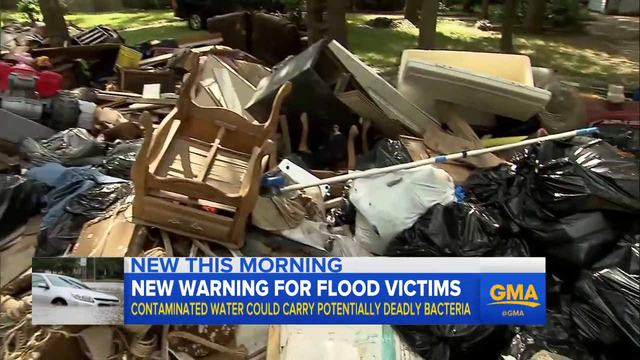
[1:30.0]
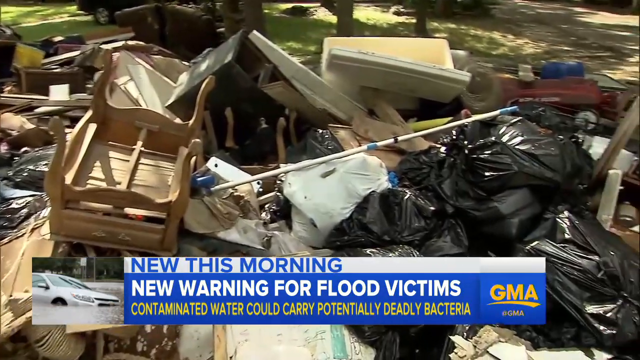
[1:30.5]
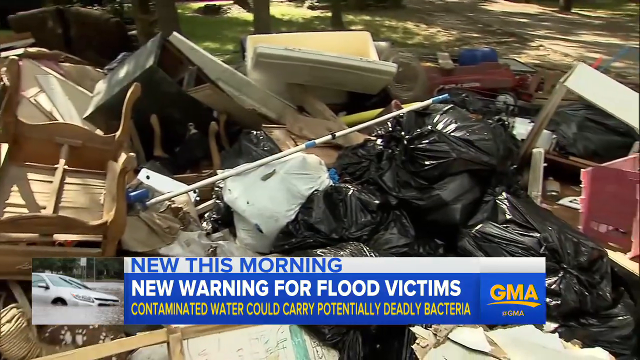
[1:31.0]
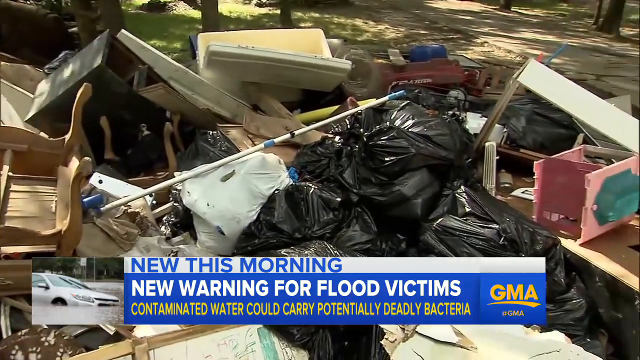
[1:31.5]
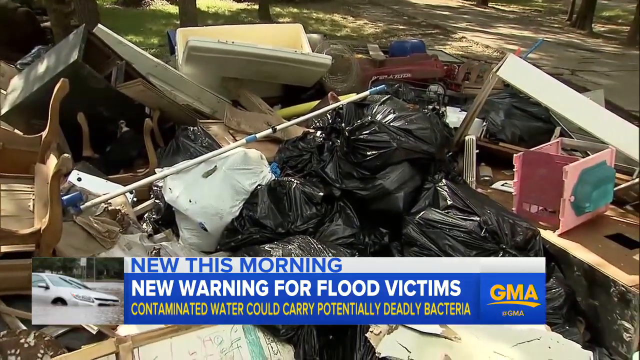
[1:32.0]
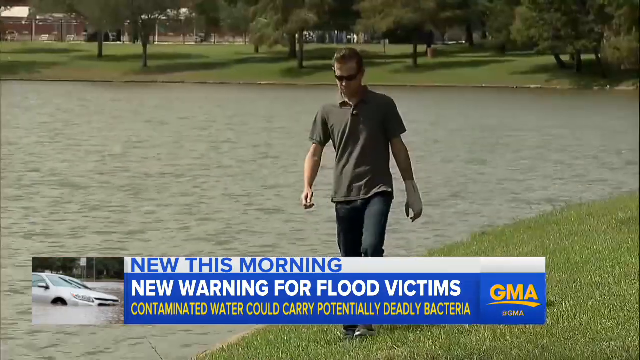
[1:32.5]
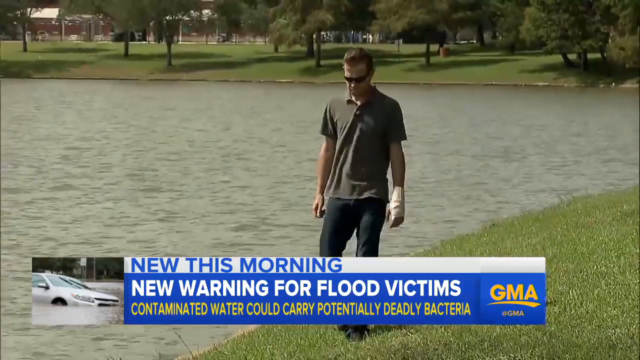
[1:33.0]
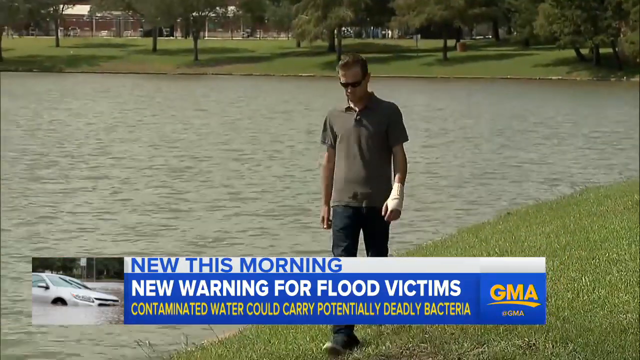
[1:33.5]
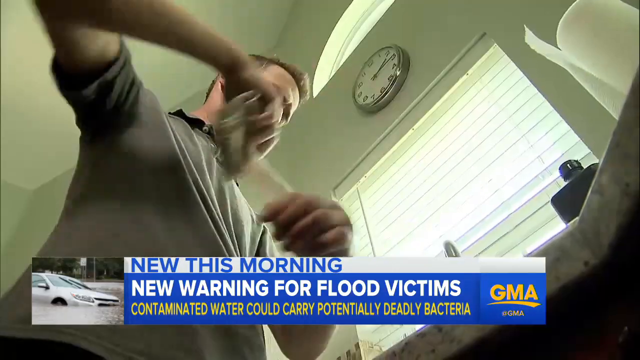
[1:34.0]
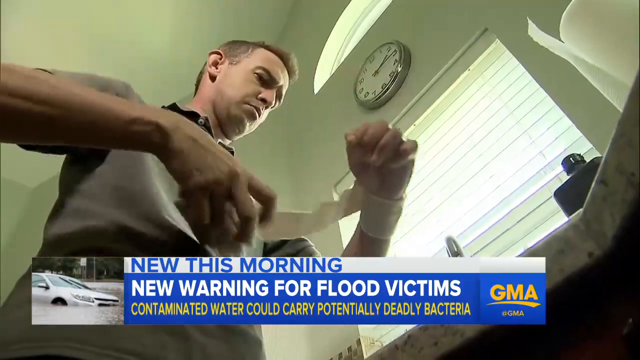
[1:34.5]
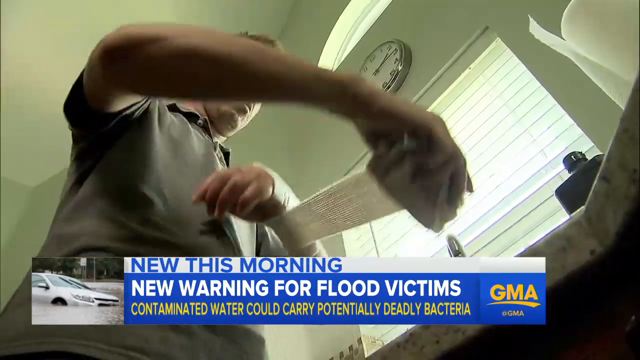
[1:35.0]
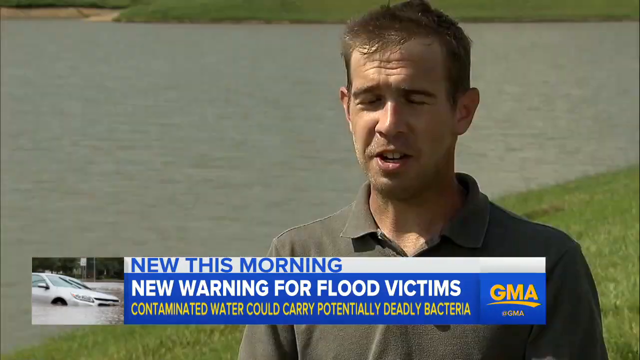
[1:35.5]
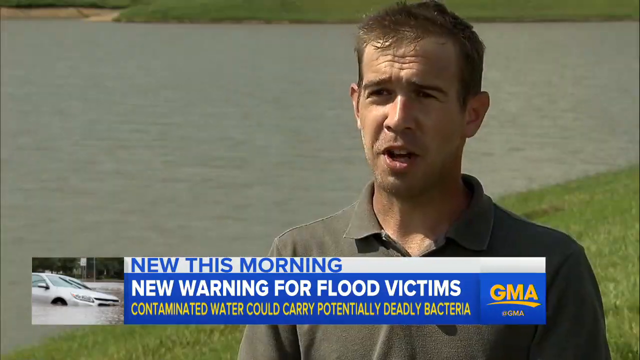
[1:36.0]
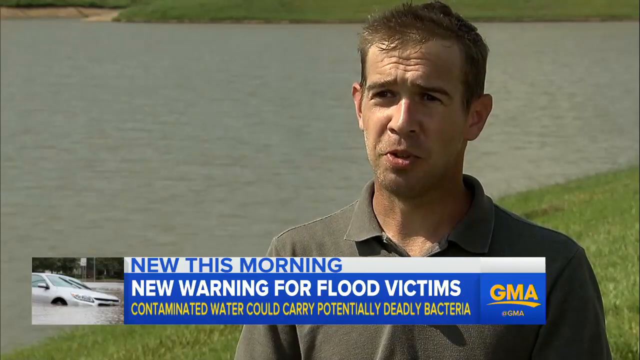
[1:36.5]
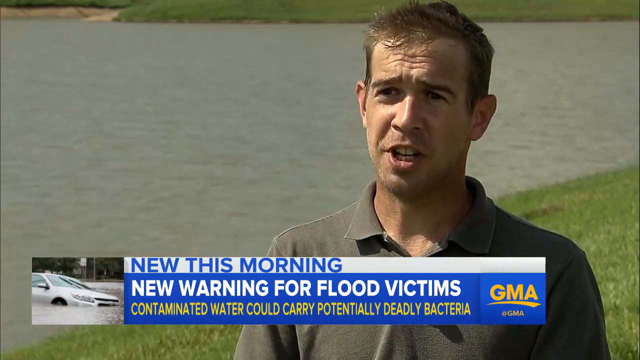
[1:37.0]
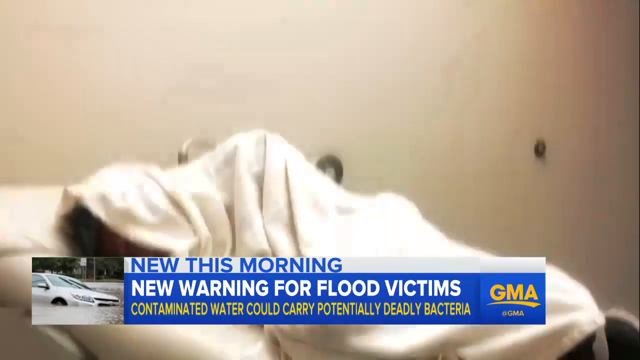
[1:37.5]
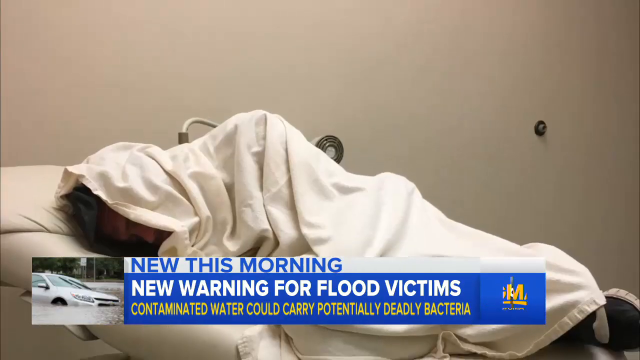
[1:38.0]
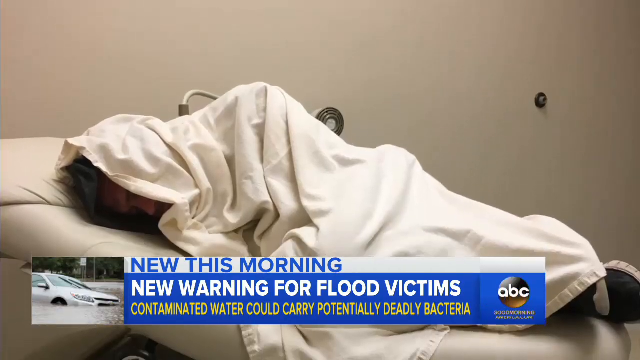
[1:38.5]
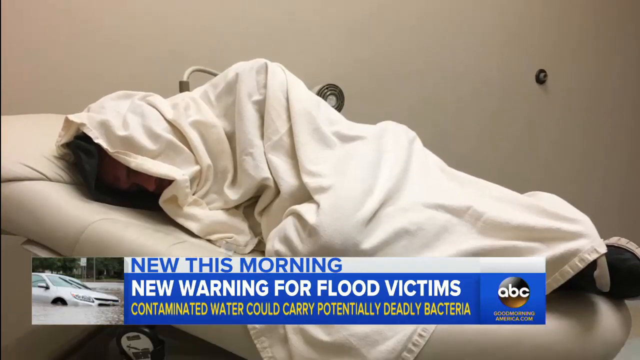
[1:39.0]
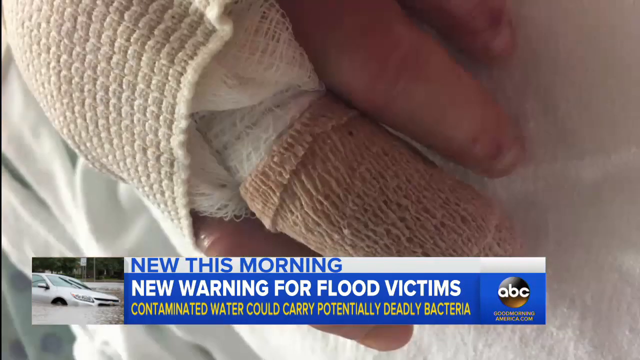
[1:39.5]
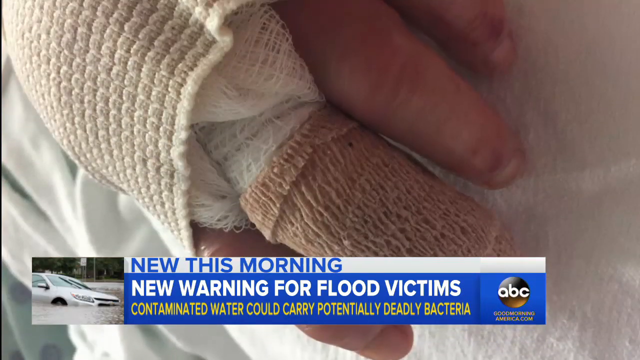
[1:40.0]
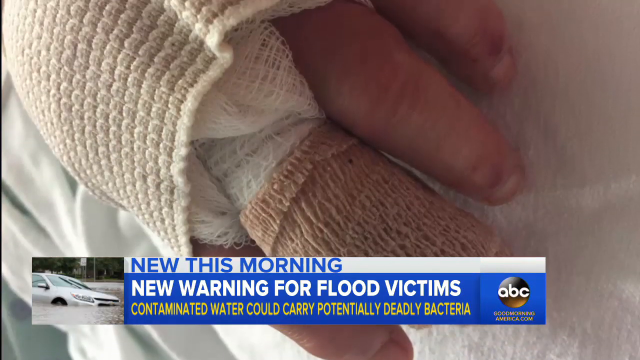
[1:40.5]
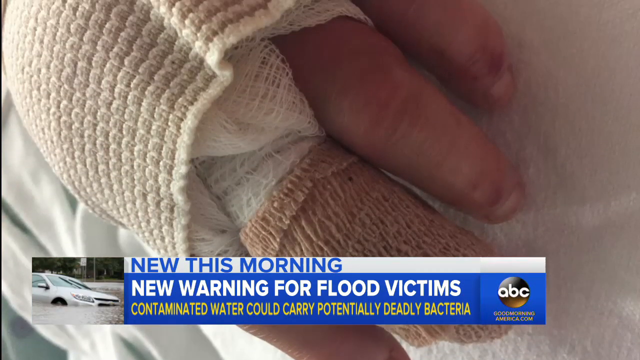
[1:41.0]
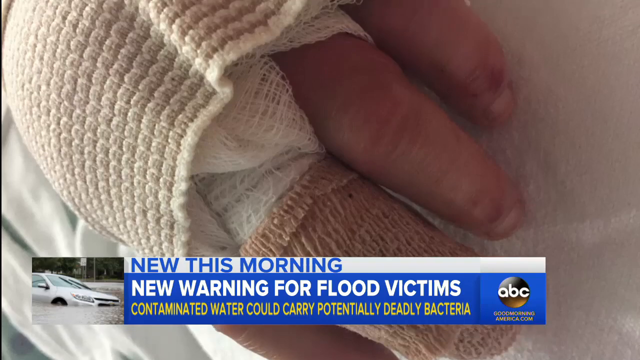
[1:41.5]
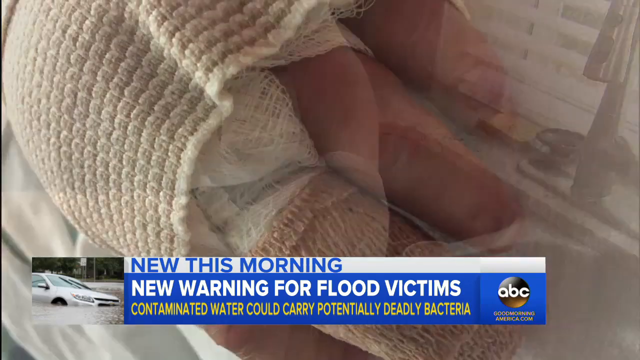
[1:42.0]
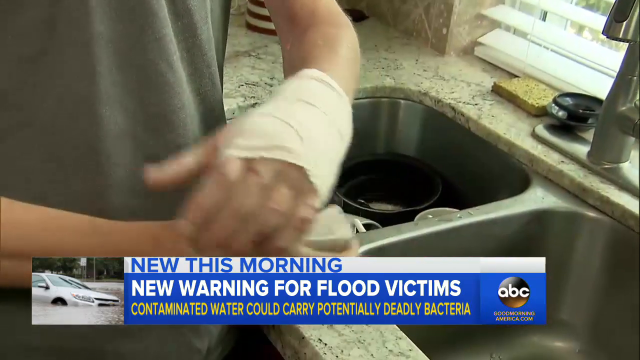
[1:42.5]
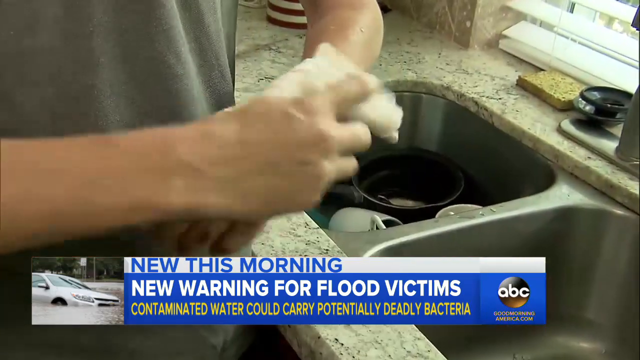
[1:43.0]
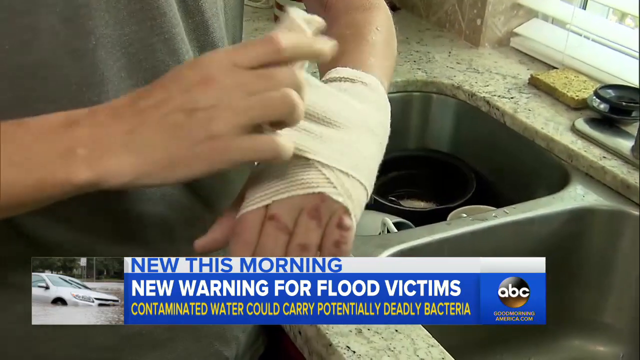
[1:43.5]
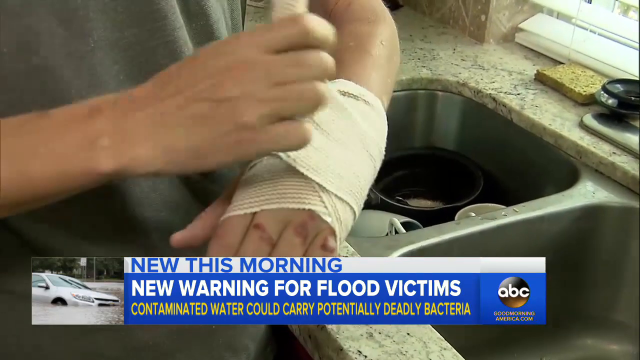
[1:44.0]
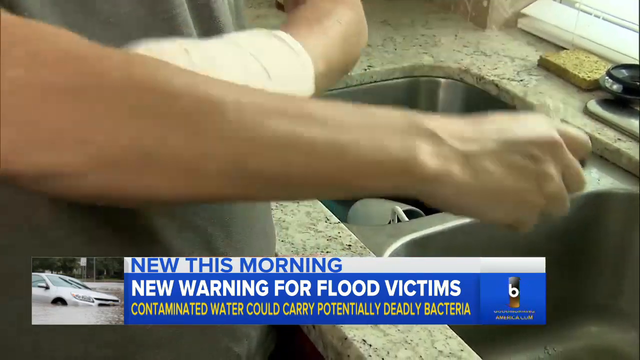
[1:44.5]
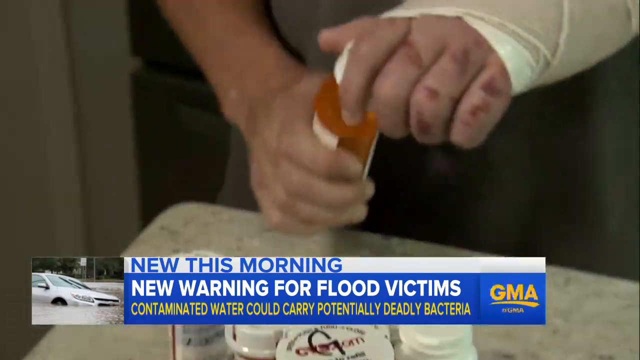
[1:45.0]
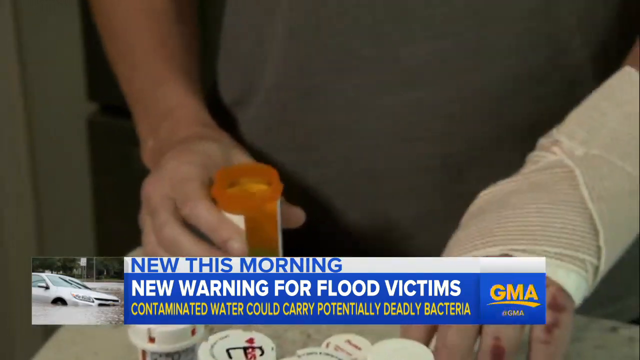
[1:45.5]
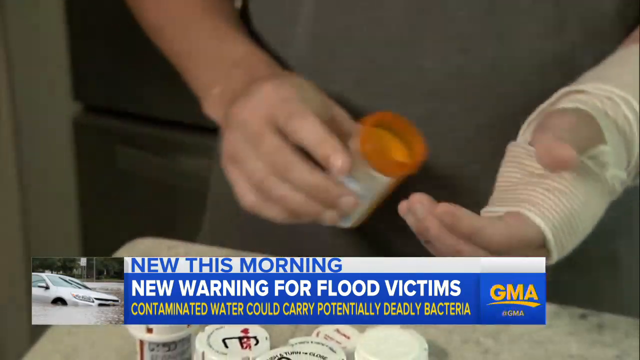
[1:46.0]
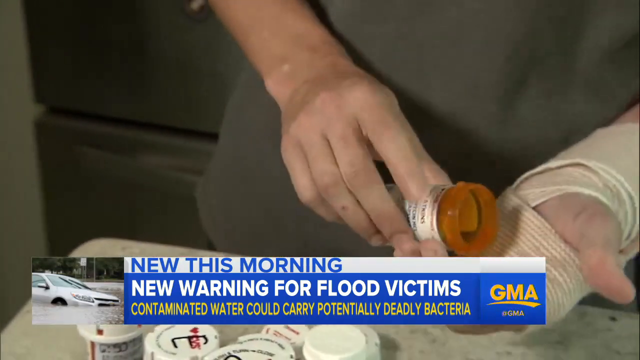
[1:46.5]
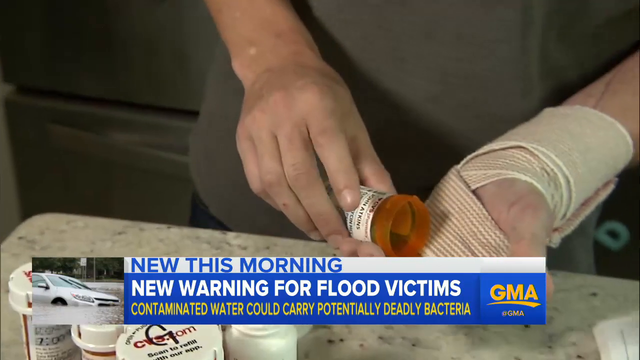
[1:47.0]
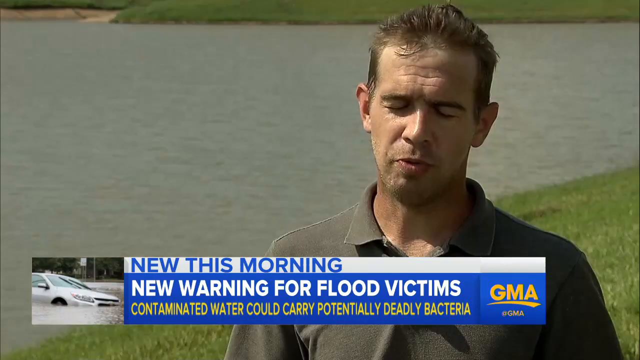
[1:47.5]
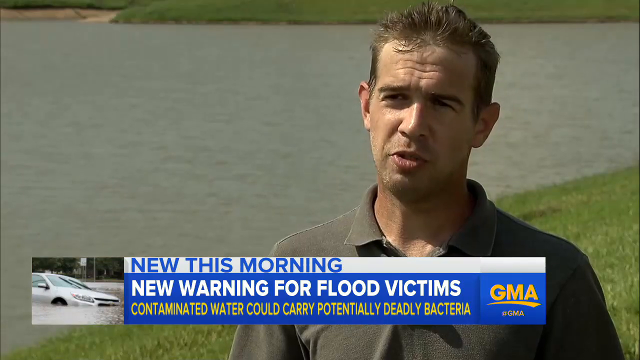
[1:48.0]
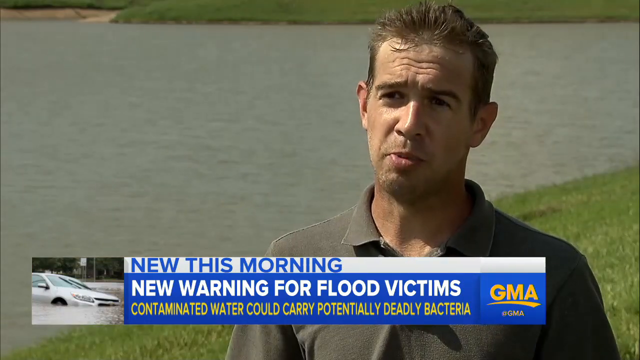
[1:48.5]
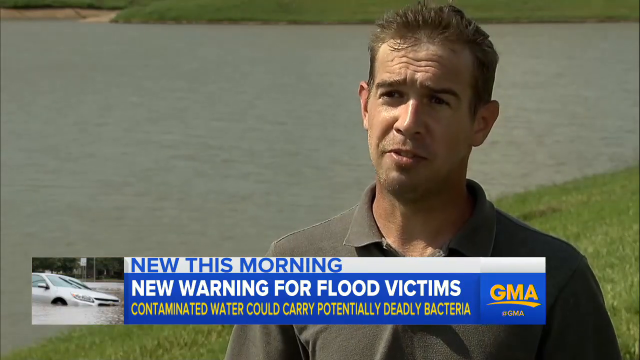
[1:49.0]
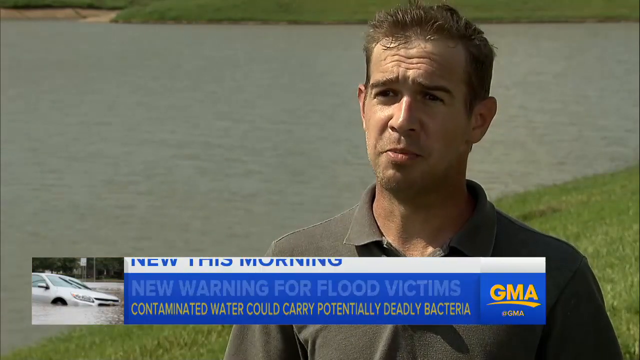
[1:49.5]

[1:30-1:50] This Good Morning America news report concerns the possibility that floodwaters could be contaminated with a dangerous bacteria. A text bar at the bottom of the screen reads, "New this morning. New warning for flood victims, Contaminated water could carry potentially deadly bacteria," with the GMA logo on the side. The camera focuses on a large pile of debris. A man then walks along a lake. In the next scene he tapes up his left wrist with a bandage, and then he is back at the lake being interviewed, speaking to someone directly behind the camera. A shot follows of someone on what looks like a hospital gurney, completely wrapped up in a white blanket and in a fetal position, and then a closeup of a left hand that is bandaged and slightly swollen. The scene switches to a kitchen inside a home, where the same man wraps a bandage around his left wrist and then opens bottles of pills and dispenses them into his hand. He is then back by the shores of the lake, and the text banner at the bottom of the screen identifies him as "J.R. Atkins, Suffered bacteria infection."